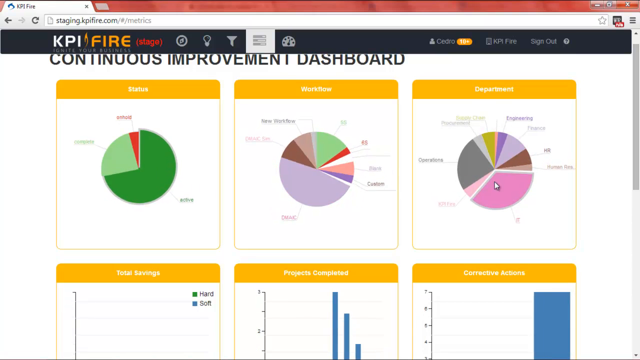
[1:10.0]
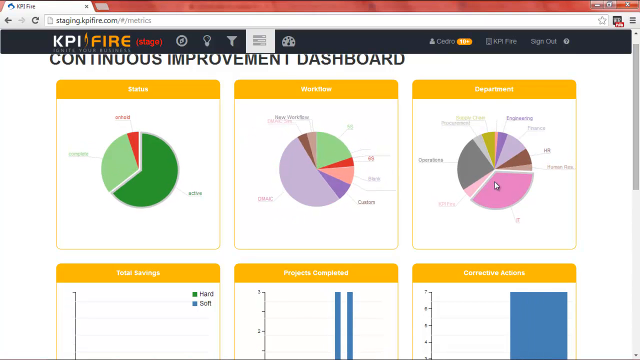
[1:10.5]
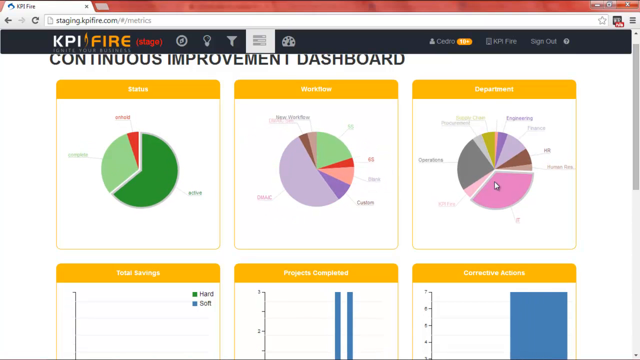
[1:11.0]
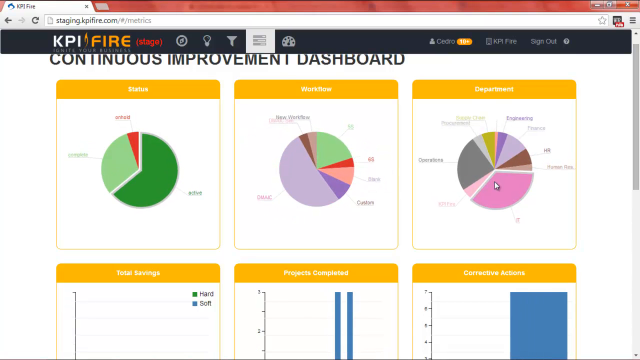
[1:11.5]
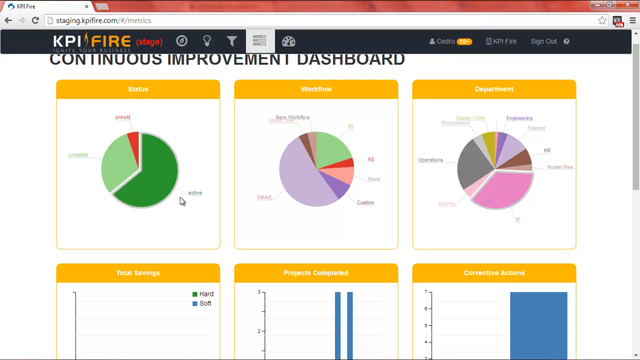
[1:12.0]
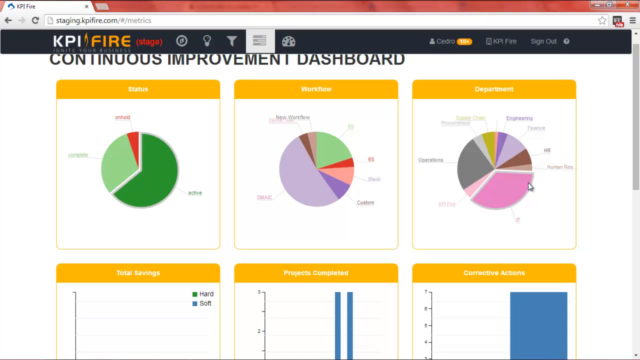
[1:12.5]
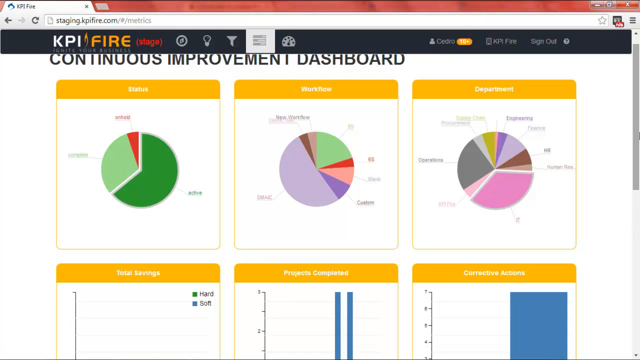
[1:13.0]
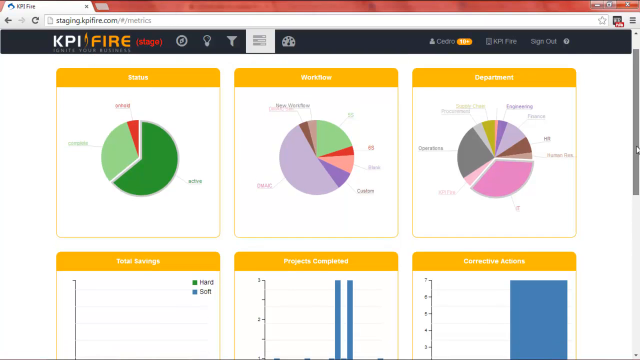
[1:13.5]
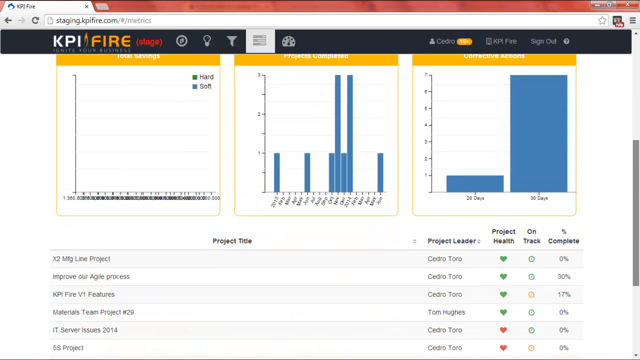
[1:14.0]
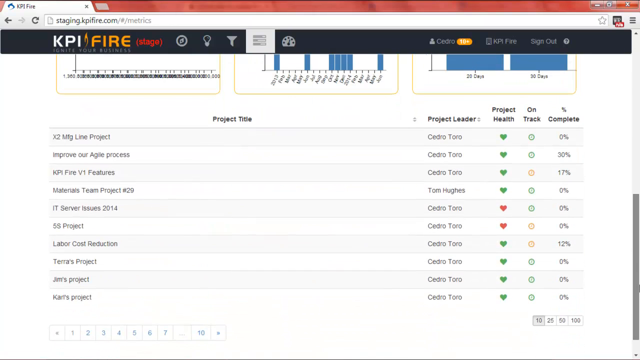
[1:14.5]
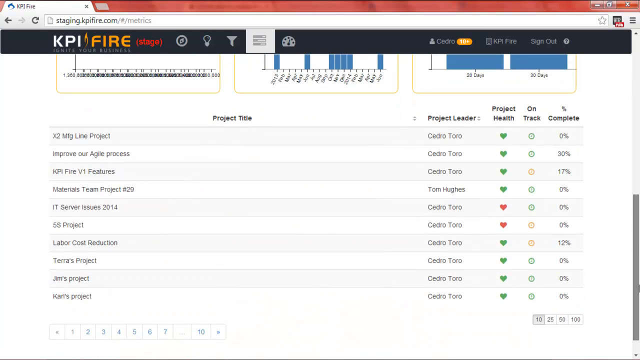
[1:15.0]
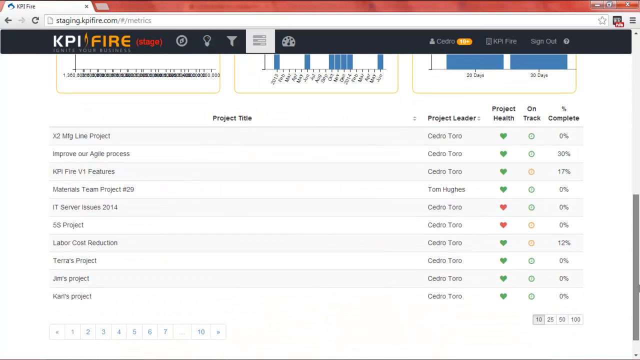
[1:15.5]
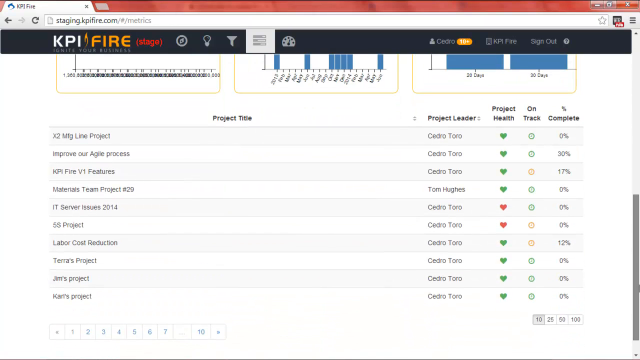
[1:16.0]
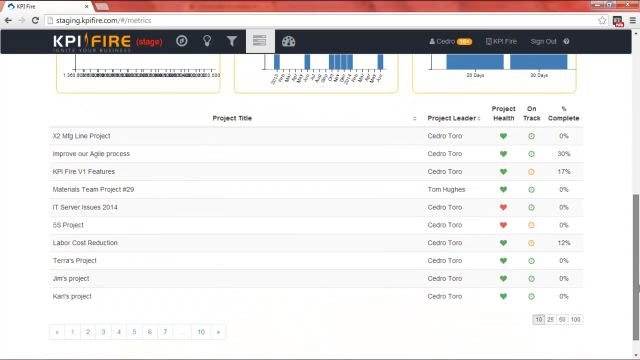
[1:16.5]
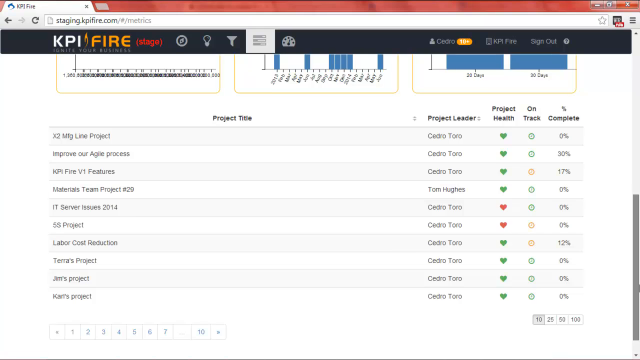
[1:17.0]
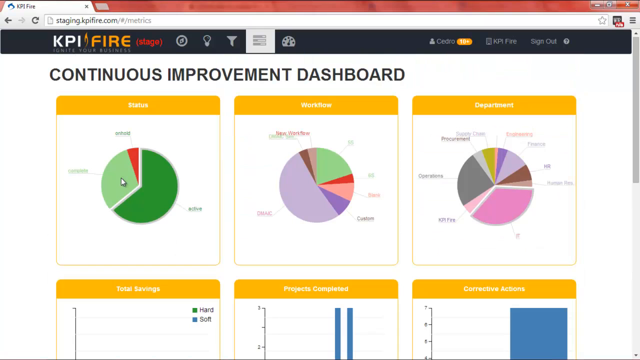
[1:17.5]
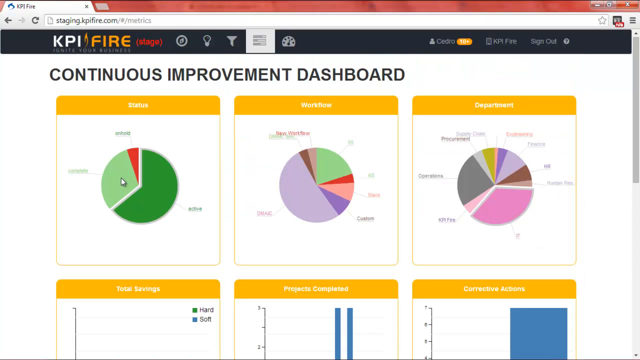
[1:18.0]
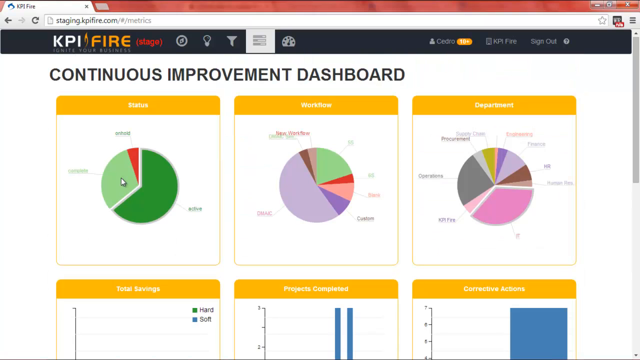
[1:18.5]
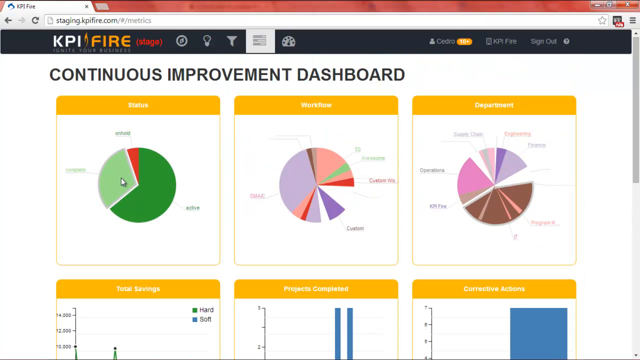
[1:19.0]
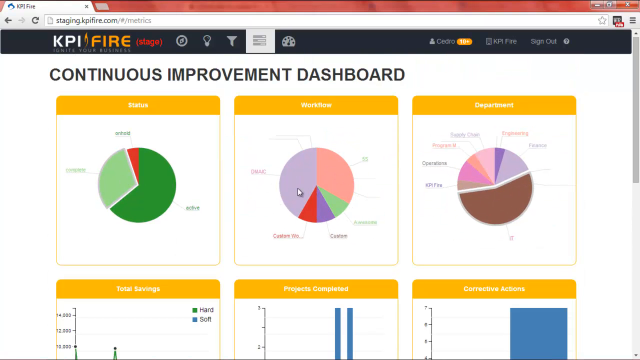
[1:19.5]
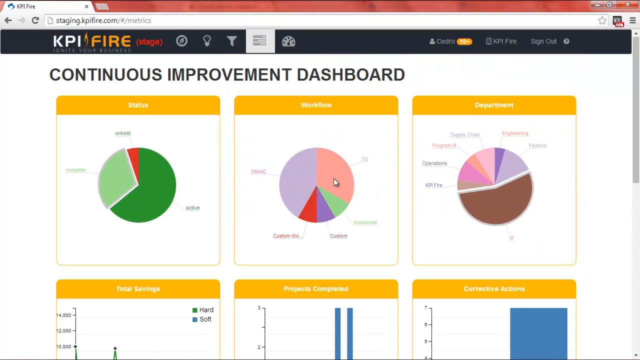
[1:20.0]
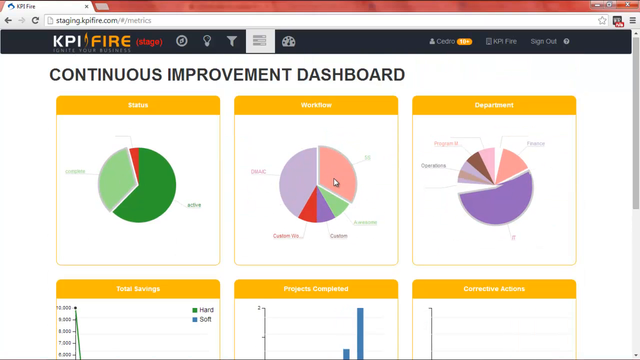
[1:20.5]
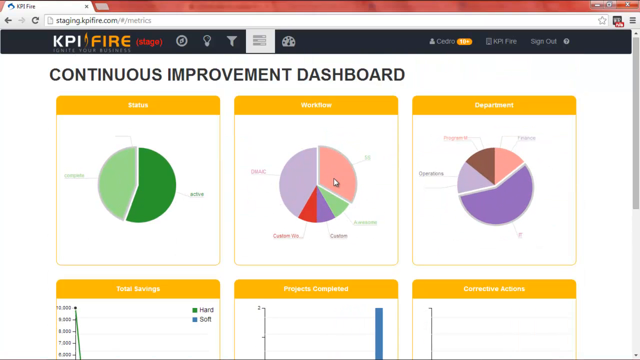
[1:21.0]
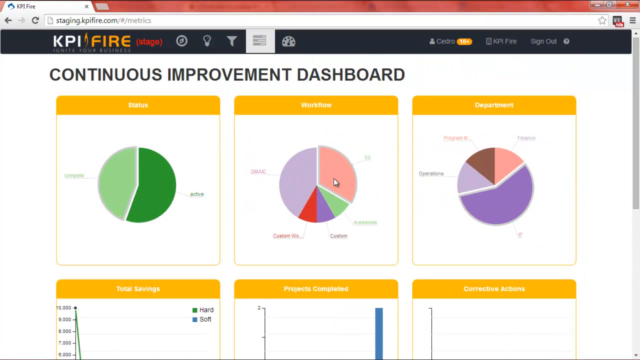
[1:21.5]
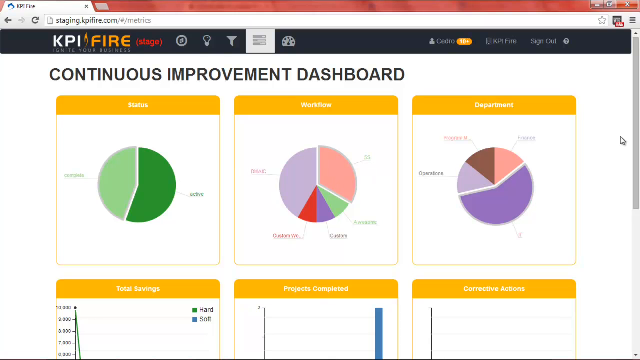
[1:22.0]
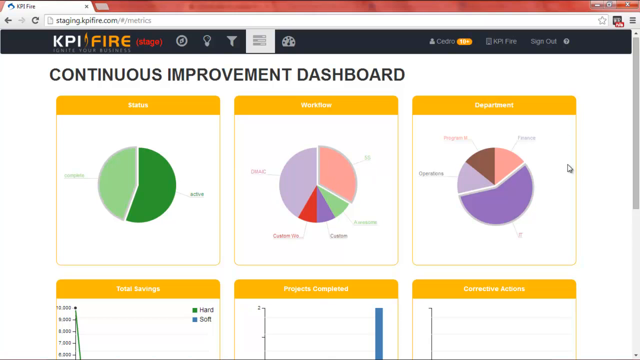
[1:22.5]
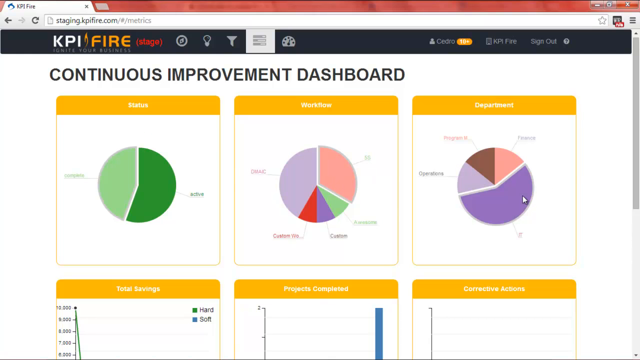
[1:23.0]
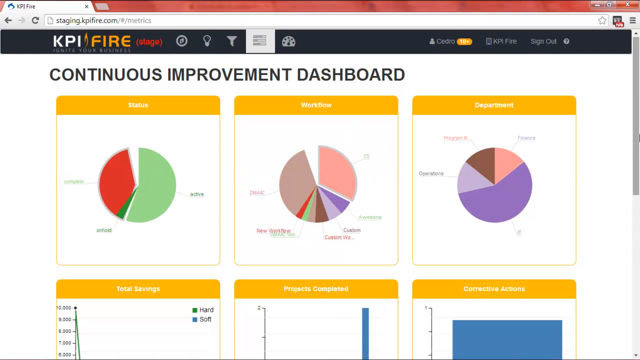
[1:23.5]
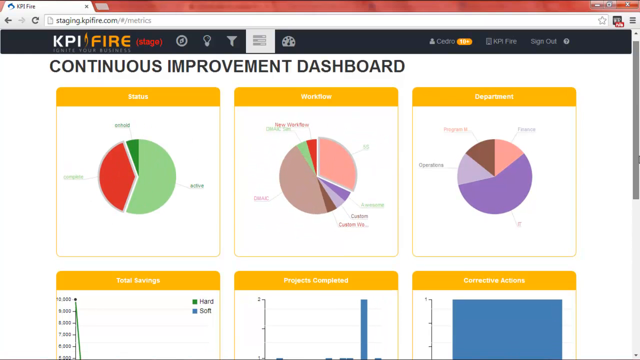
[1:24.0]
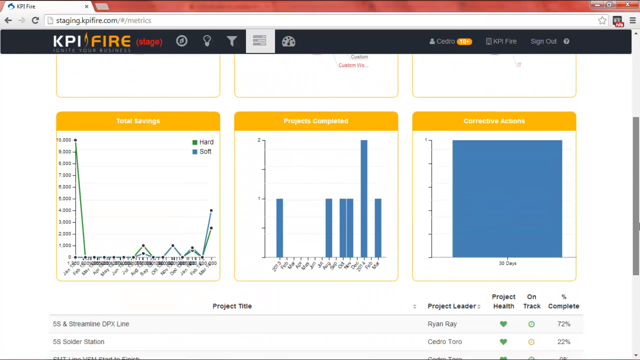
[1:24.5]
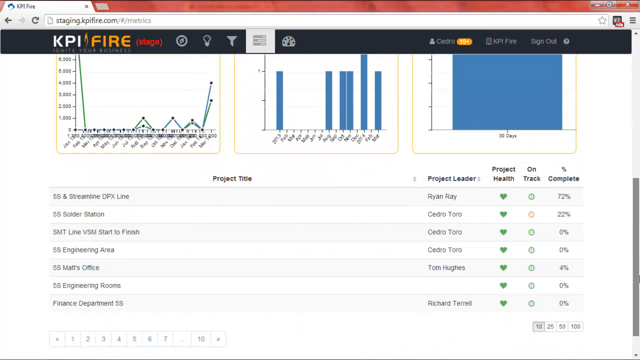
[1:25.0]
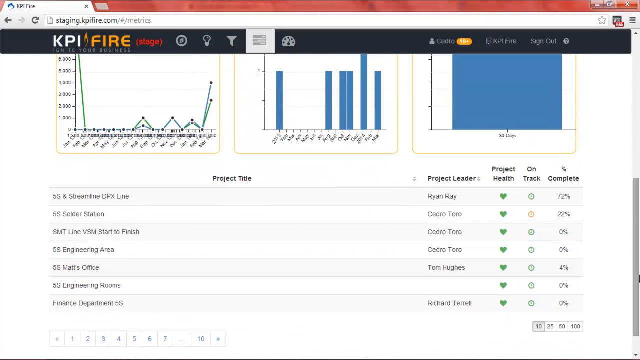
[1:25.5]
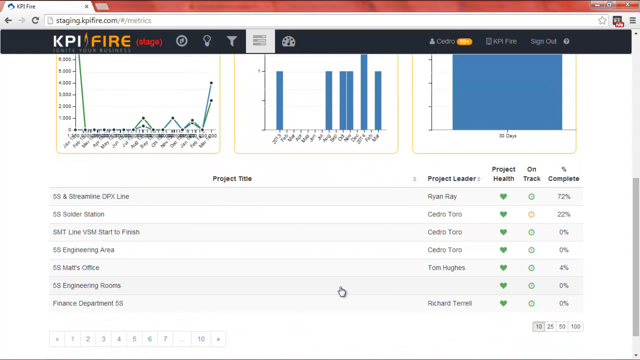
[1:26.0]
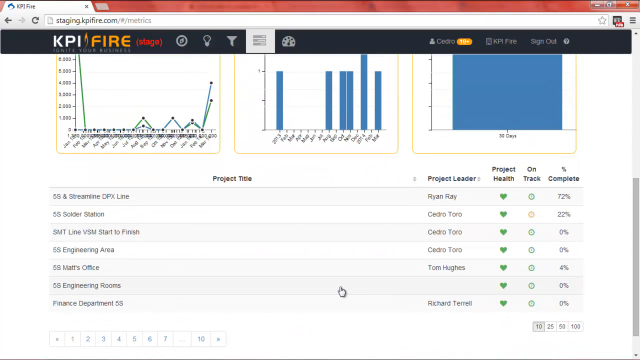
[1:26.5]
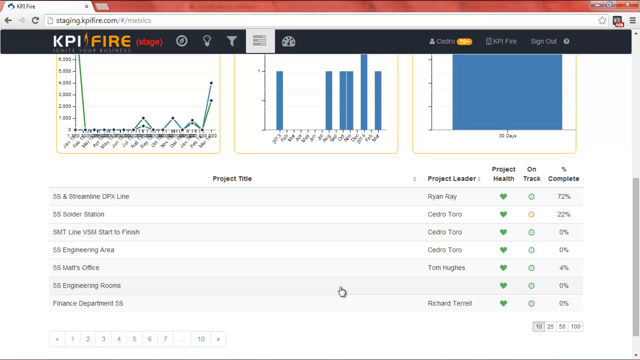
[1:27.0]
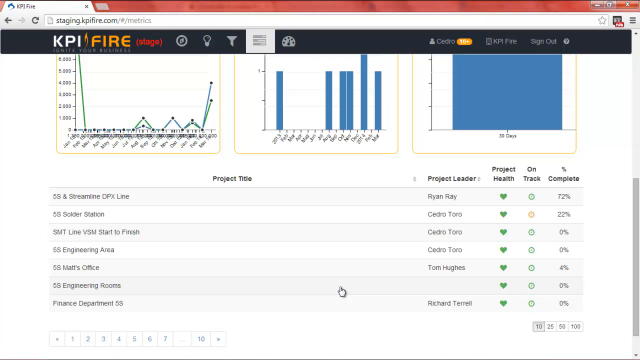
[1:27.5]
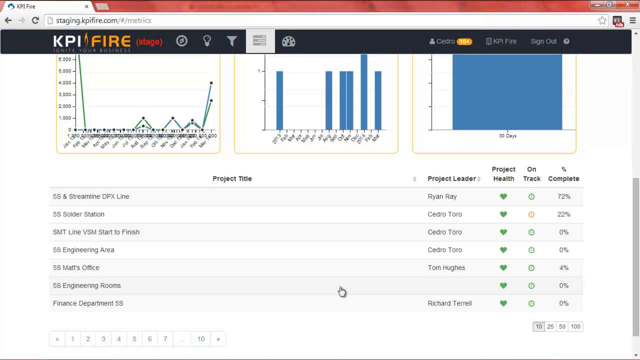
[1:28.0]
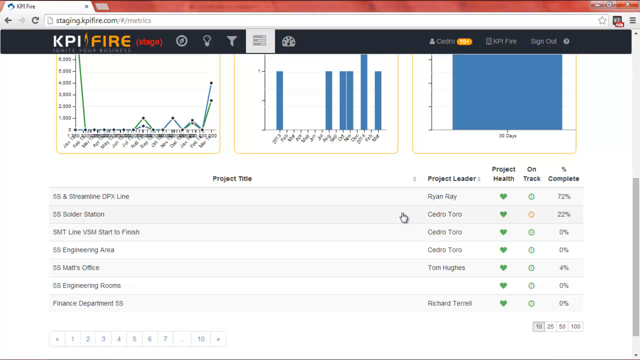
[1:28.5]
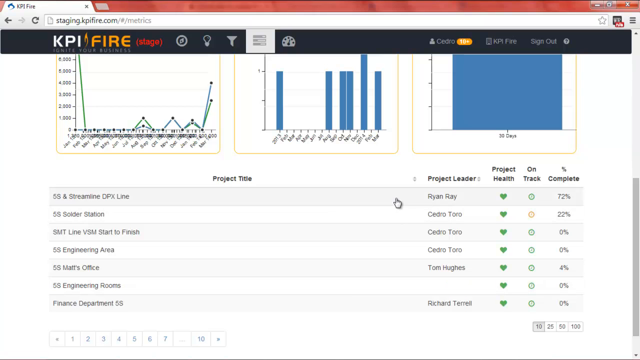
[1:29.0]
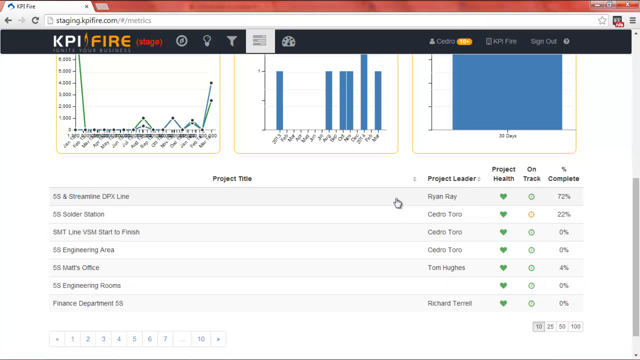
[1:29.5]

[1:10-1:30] The three pie charts are still on screen, and the user moves the mouse to the scroll bar and pulls it down to show the project titles, which now show different project titles and different project health information. The user goes back to the top of the screen with the three pie charts and clicks the left side of the first pie chart, then moves the mouse to the middle pie chart and clicks its pink section. More animations play with each click, showing the different sections and their sizes and portions on the pie chart. The user then scrolls back down to view the project titles for that section of the pie chart; the project titles and health change depending on the last clicked pie chart section.